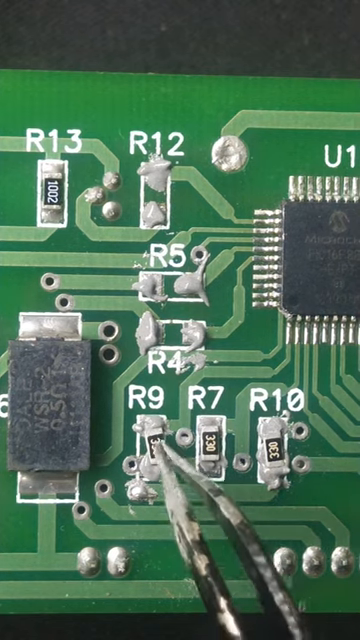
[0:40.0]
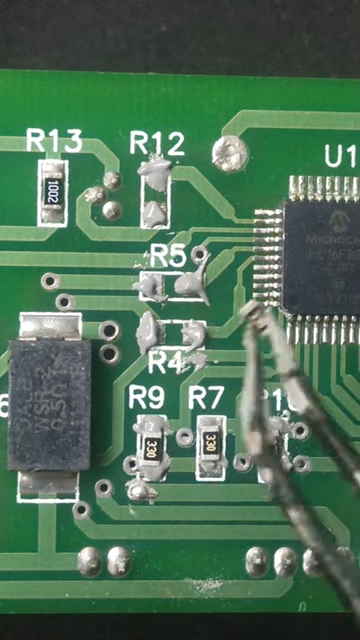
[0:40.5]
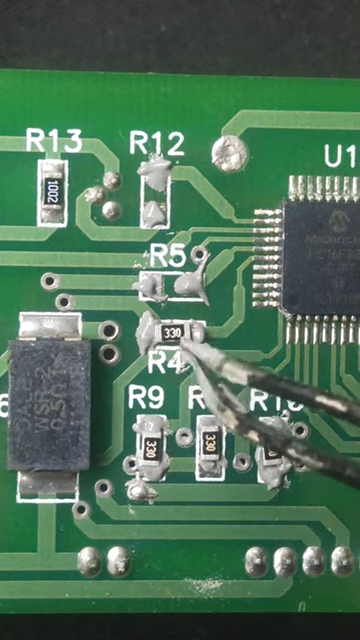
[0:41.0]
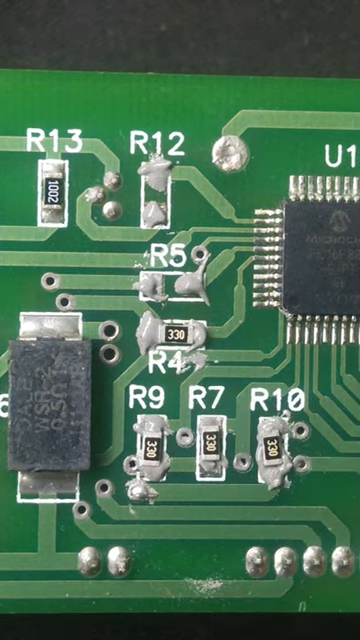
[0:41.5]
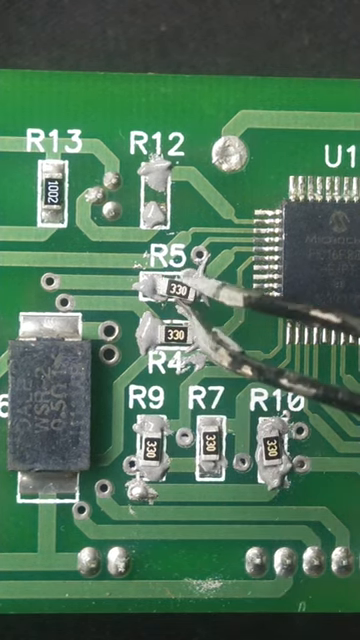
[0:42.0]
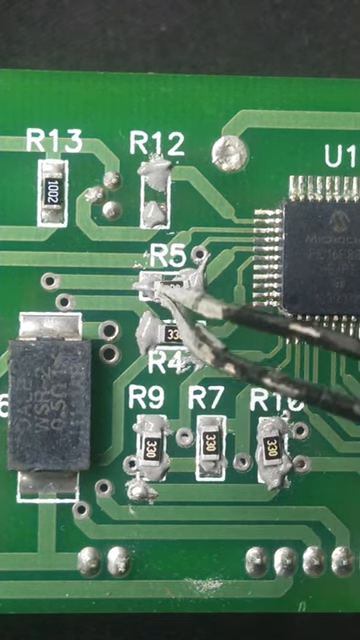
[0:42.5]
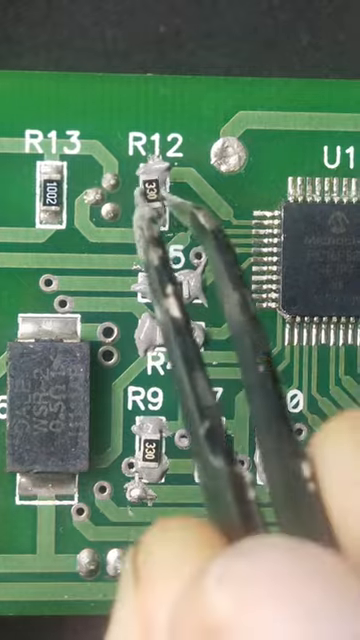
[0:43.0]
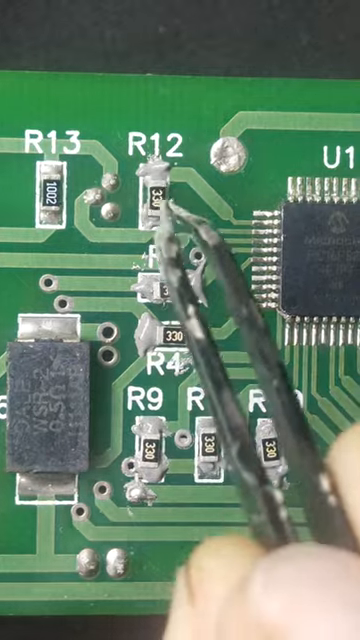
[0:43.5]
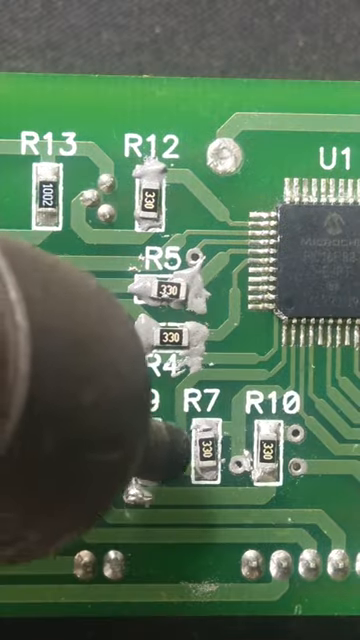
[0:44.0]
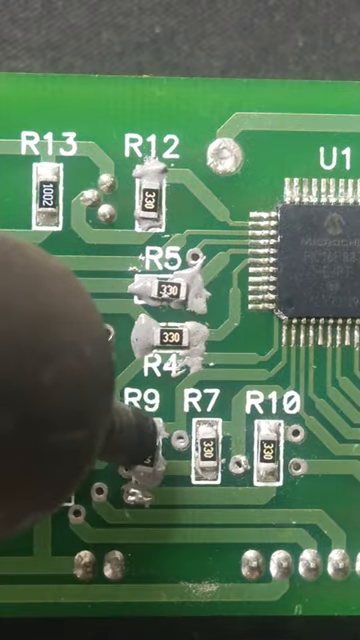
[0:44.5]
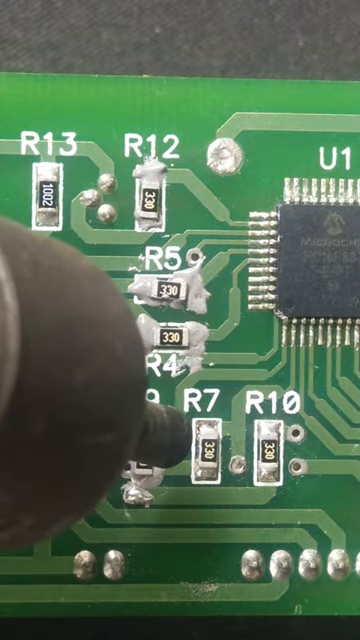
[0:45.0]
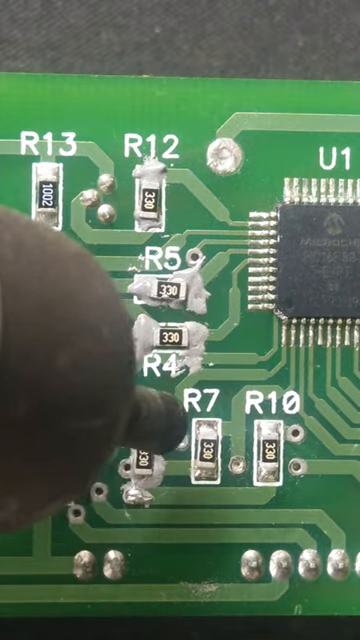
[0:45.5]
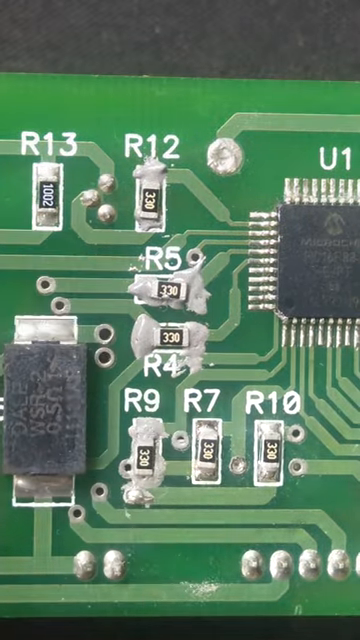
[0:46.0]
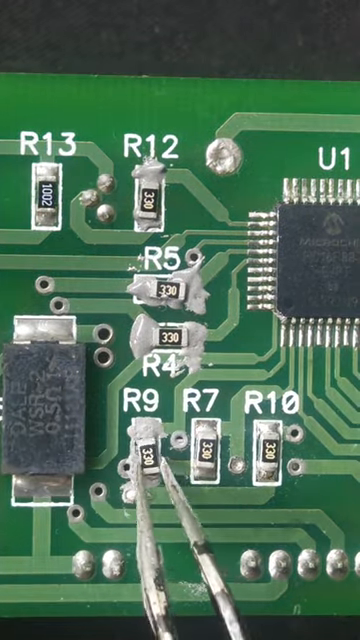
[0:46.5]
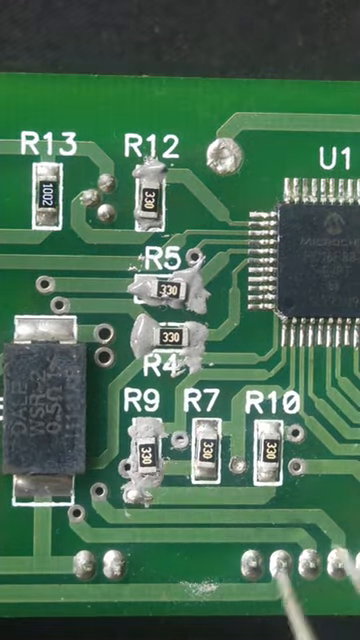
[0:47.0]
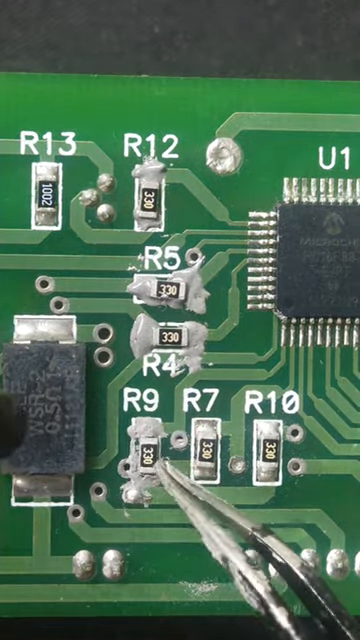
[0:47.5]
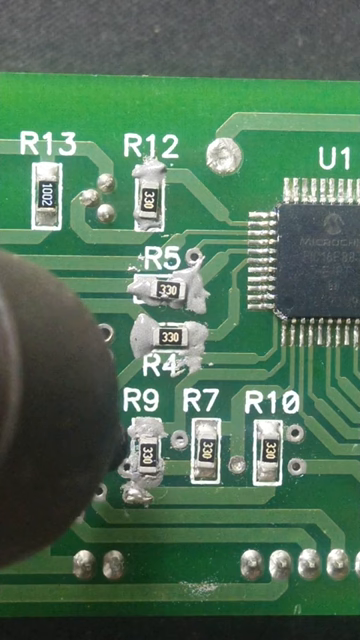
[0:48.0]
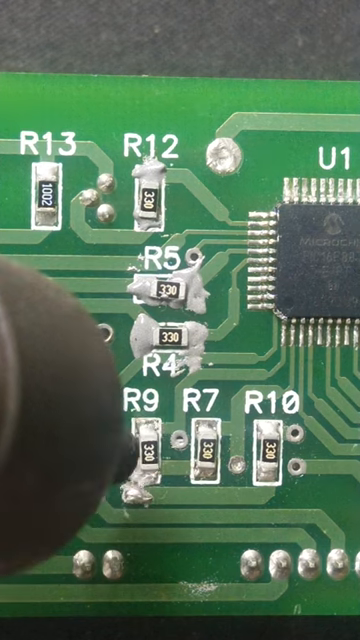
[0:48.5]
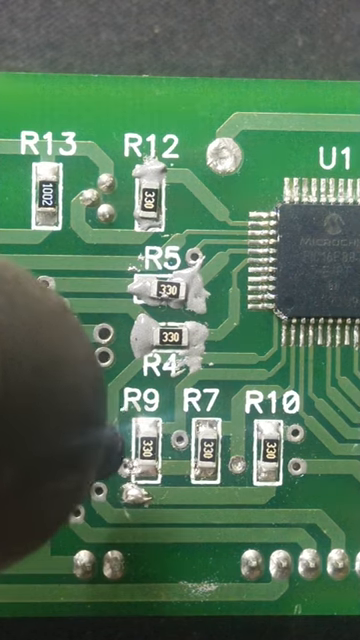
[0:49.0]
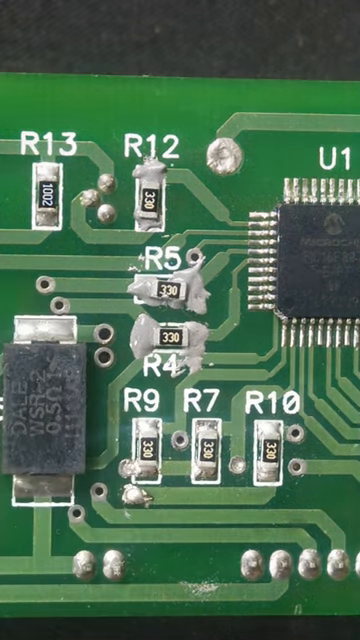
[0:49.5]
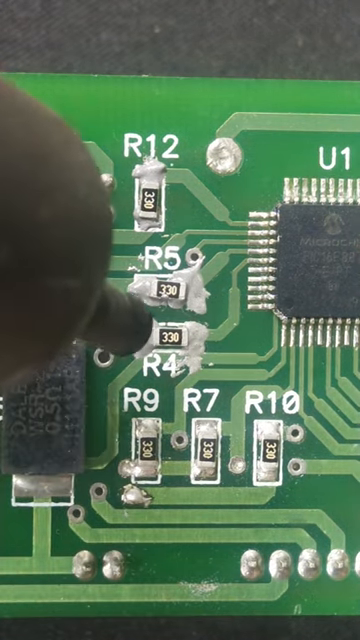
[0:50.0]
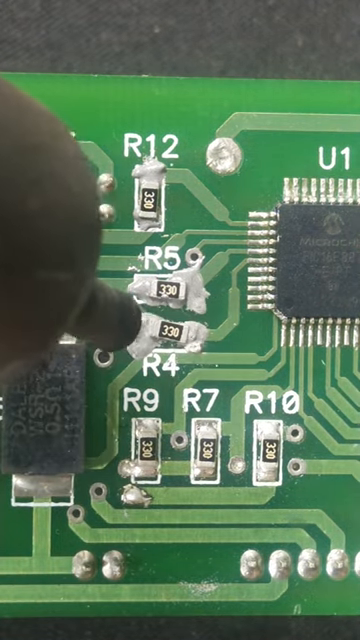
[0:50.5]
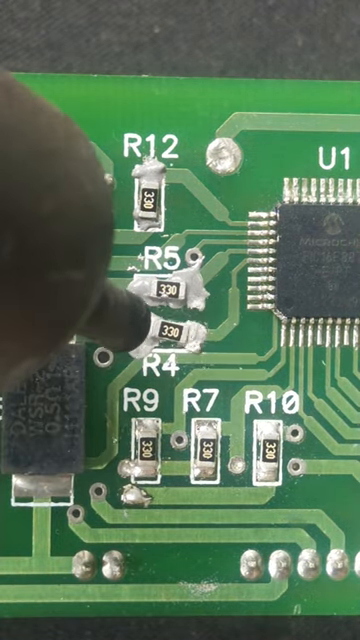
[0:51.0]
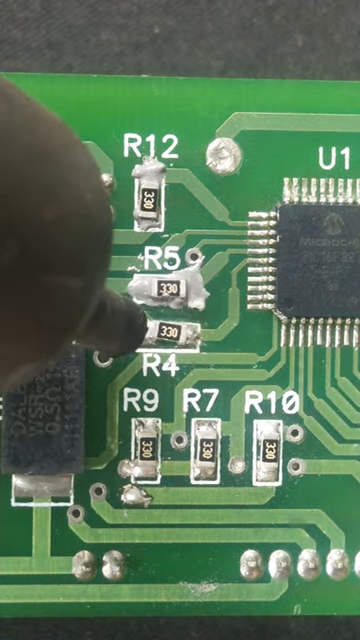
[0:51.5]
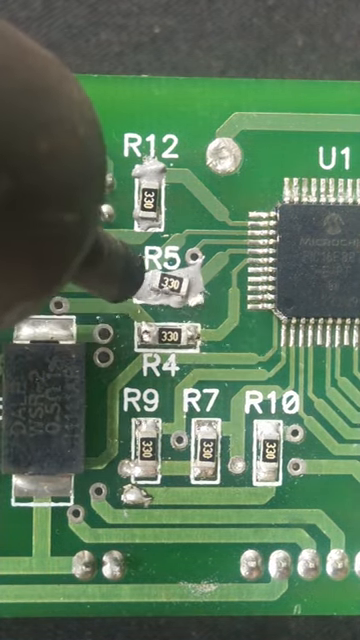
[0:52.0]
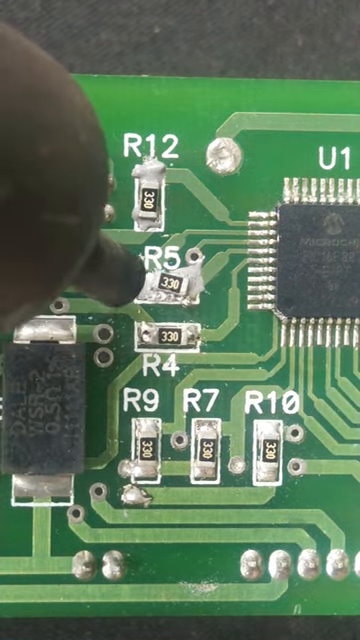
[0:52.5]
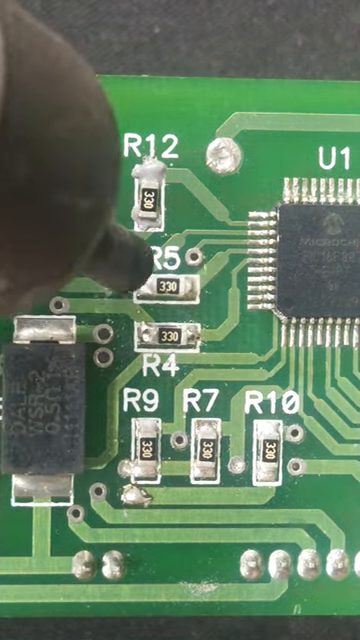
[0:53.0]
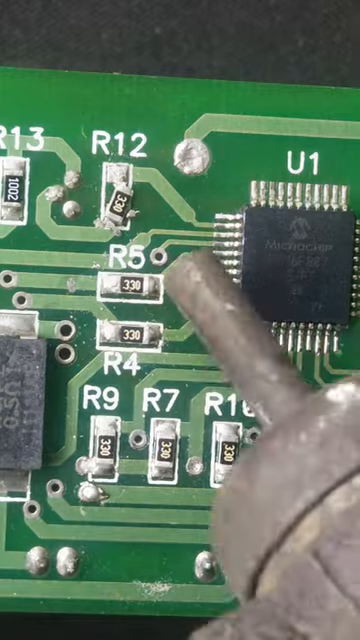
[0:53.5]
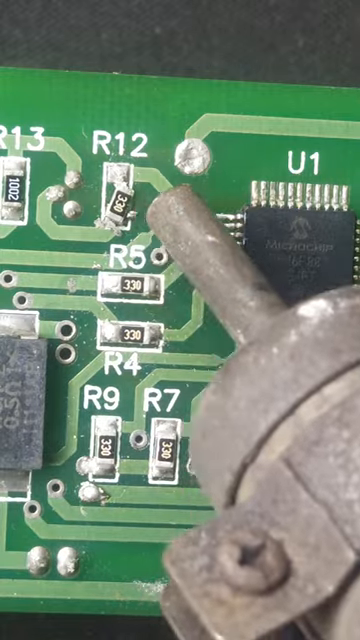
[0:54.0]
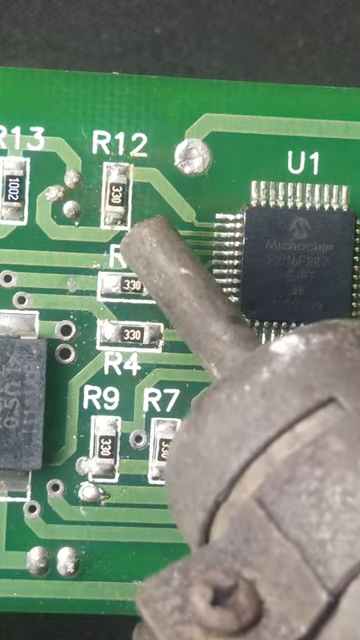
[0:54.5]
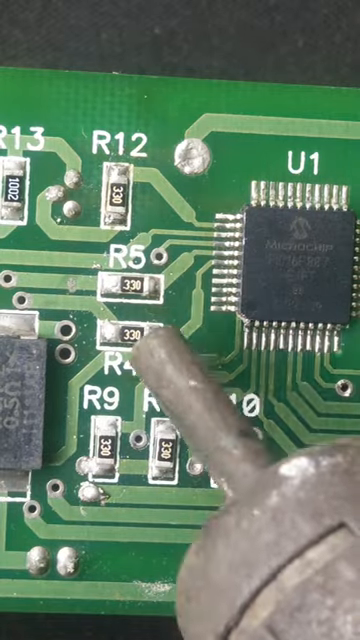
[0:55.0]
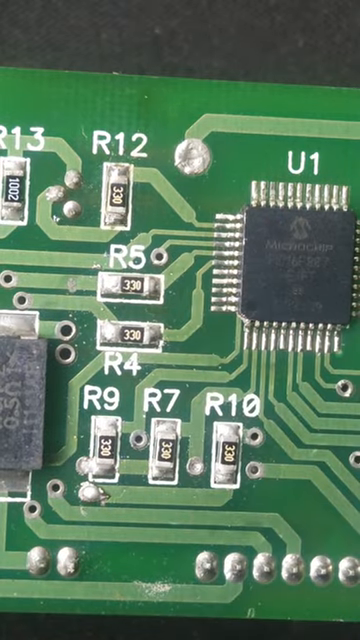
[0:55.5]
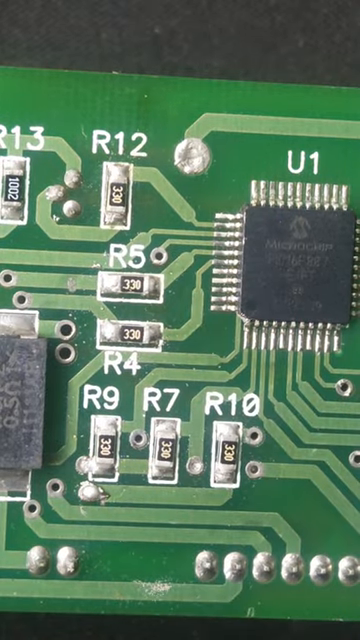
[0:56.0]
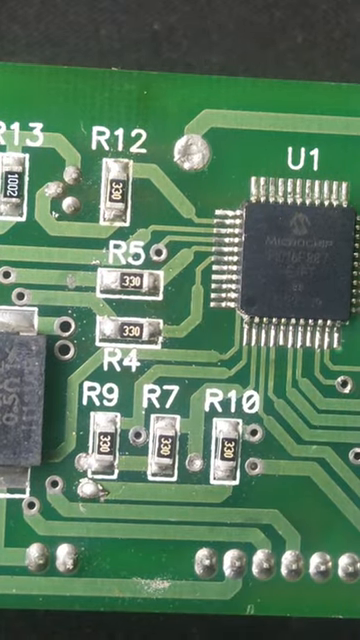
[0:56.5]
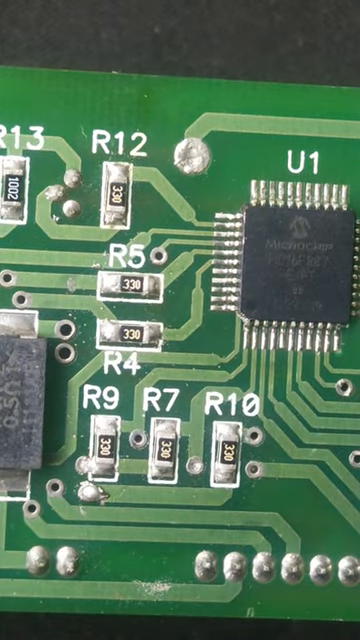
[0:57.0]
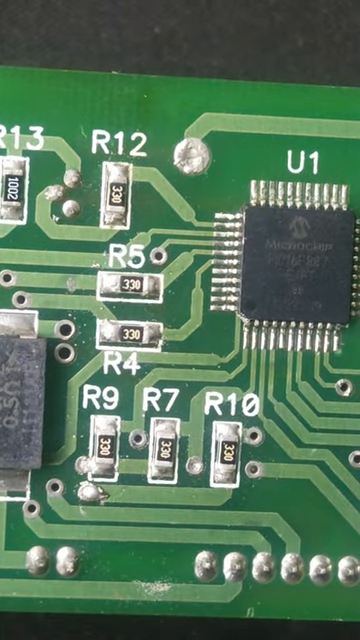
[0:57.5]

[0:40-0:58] The same man continues his video, apparently showing how to do easy soldering on an SMD device or panel. He has placed some of the little sticker items on the outputs R9, R7, R10 and R5 with the small tweezers, and then uses some kind of circular tool that touches the outputs and kind of moves with them, possibly soldering something together. It appears it could be funneling some kind of hot air through it, and this appears to be one of the final stages of the soldering.